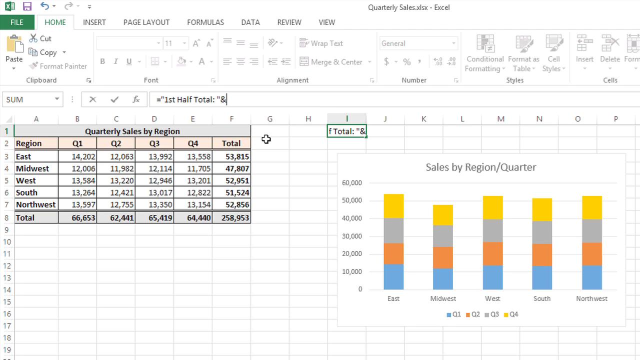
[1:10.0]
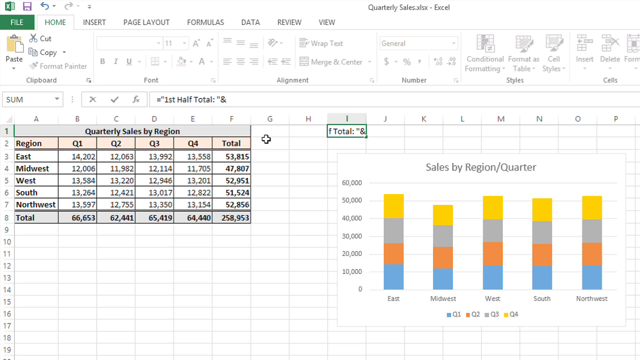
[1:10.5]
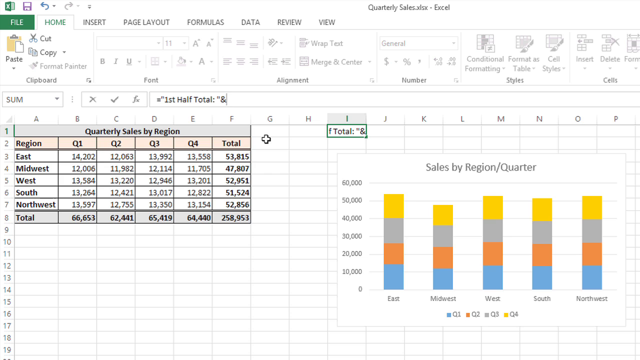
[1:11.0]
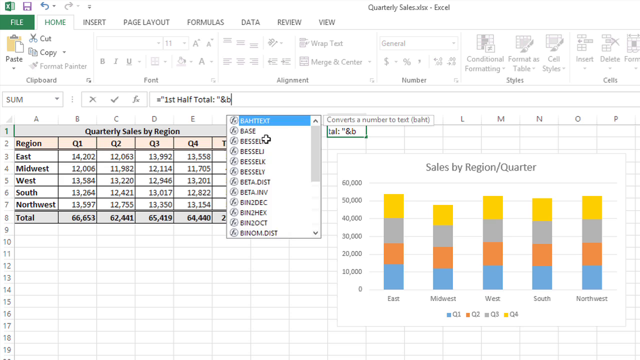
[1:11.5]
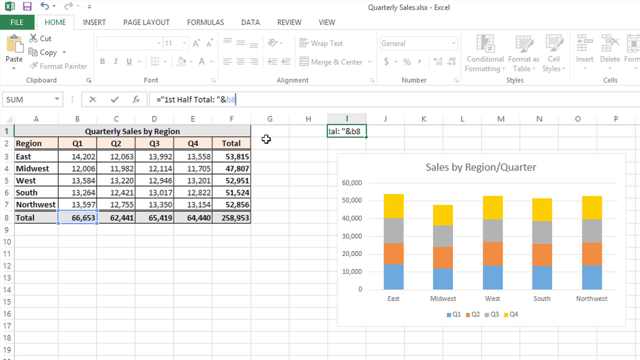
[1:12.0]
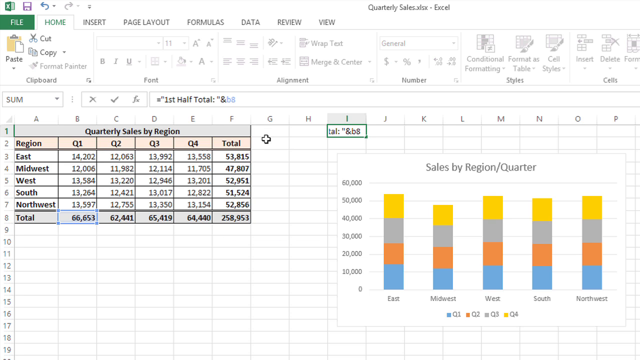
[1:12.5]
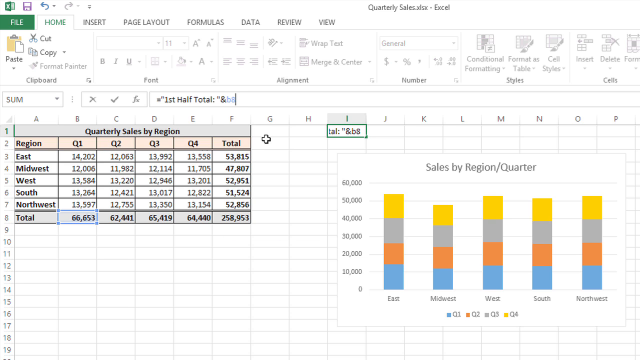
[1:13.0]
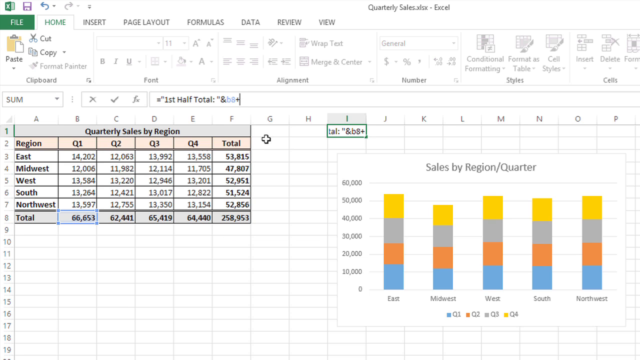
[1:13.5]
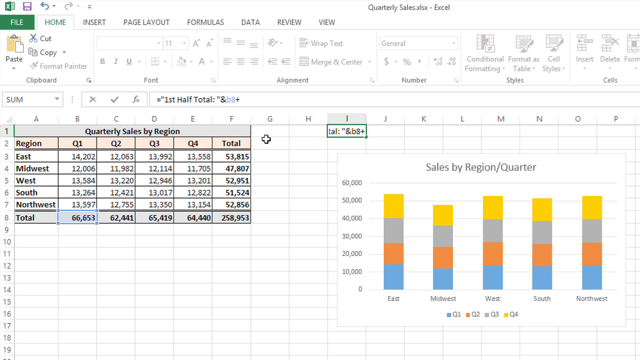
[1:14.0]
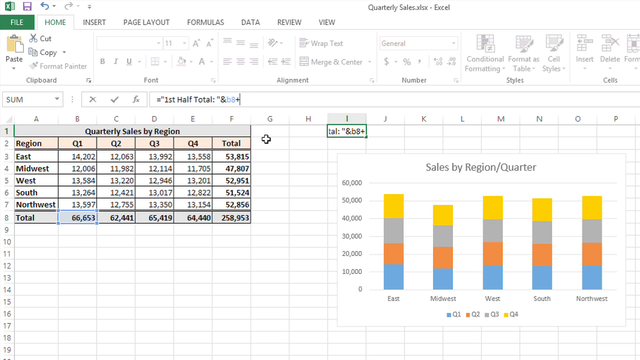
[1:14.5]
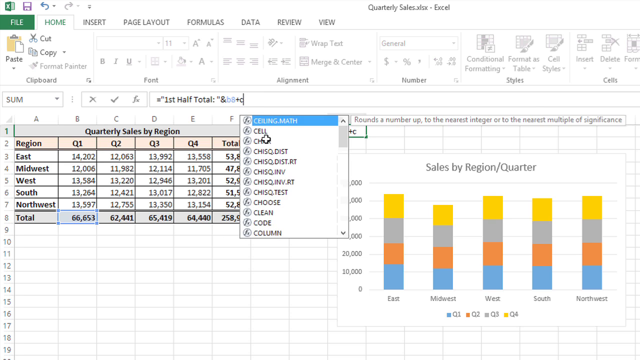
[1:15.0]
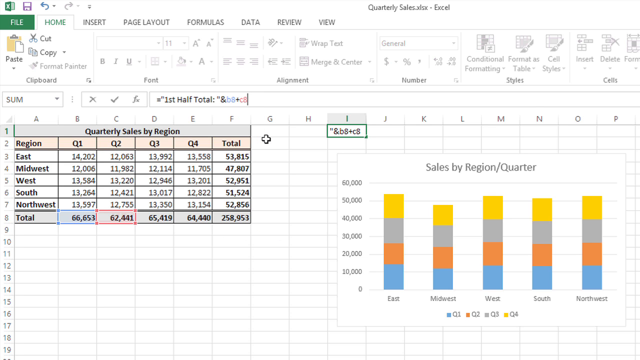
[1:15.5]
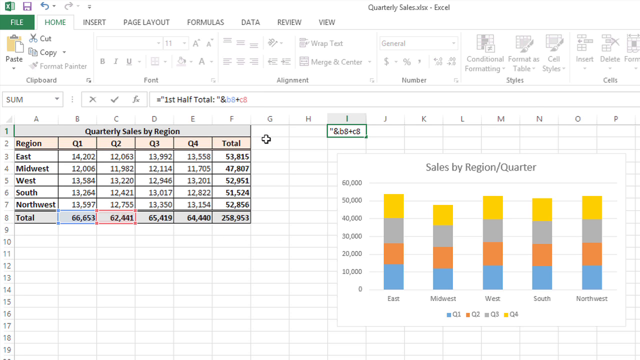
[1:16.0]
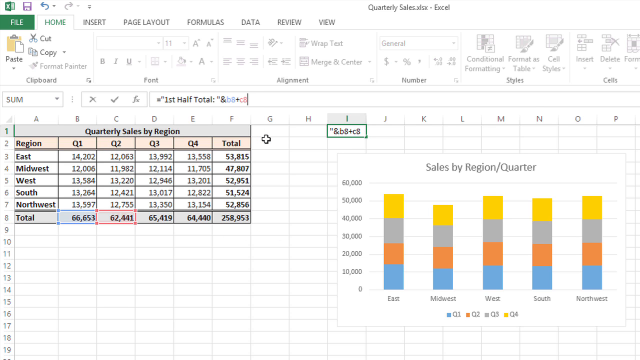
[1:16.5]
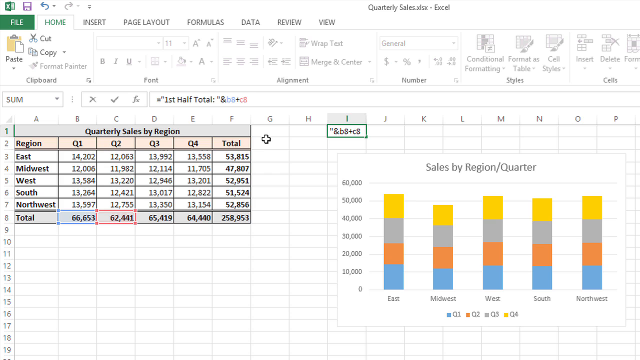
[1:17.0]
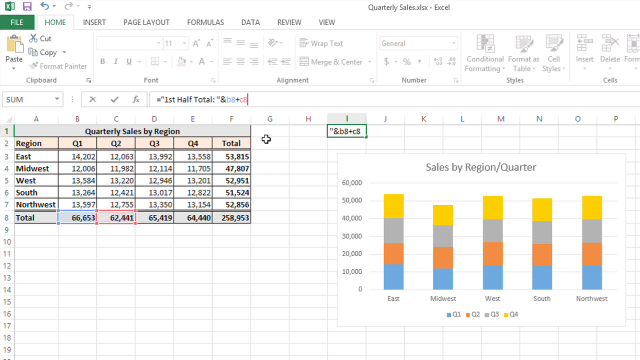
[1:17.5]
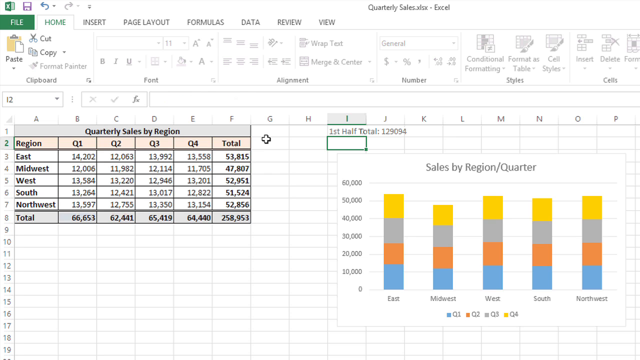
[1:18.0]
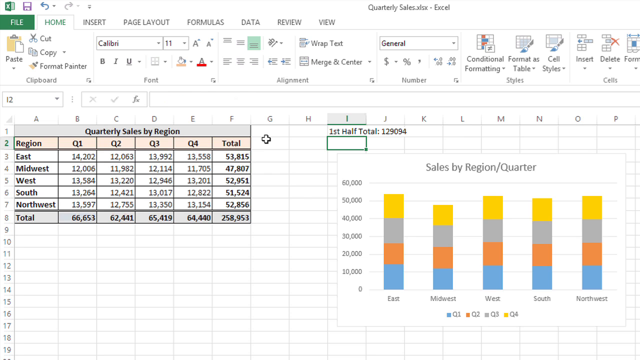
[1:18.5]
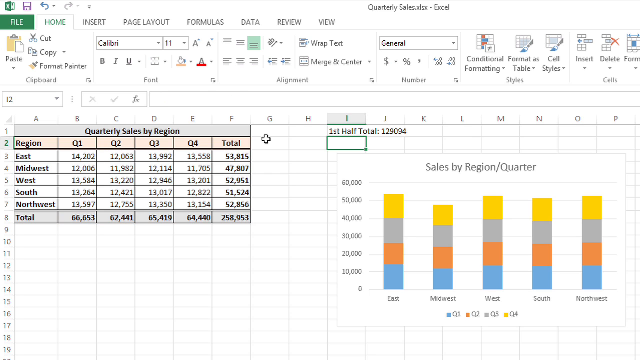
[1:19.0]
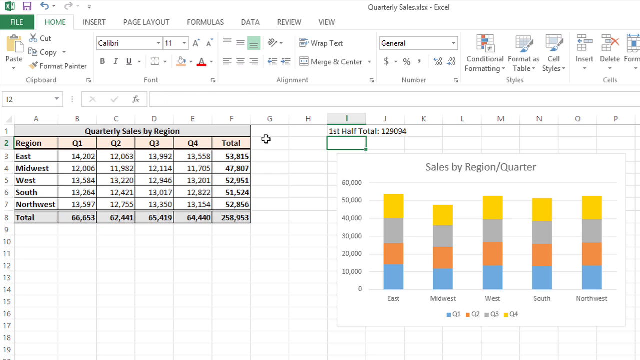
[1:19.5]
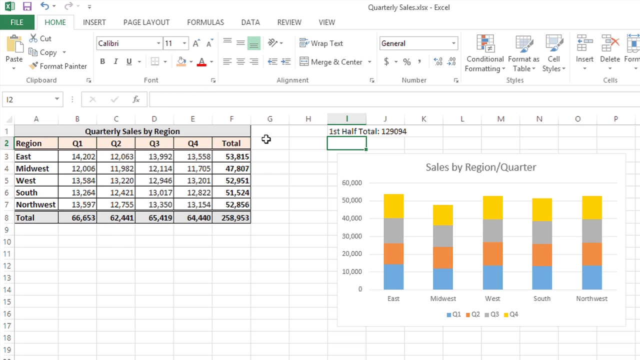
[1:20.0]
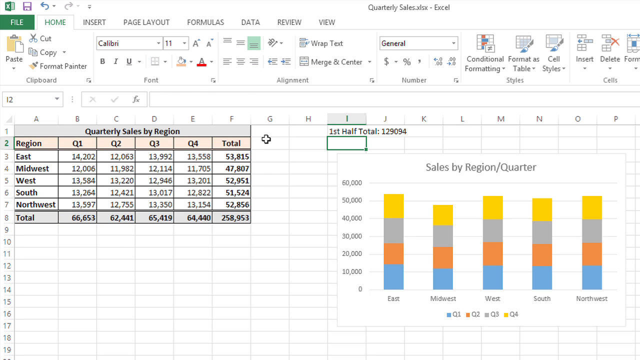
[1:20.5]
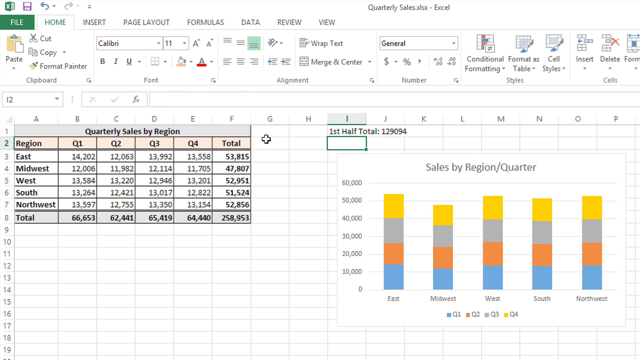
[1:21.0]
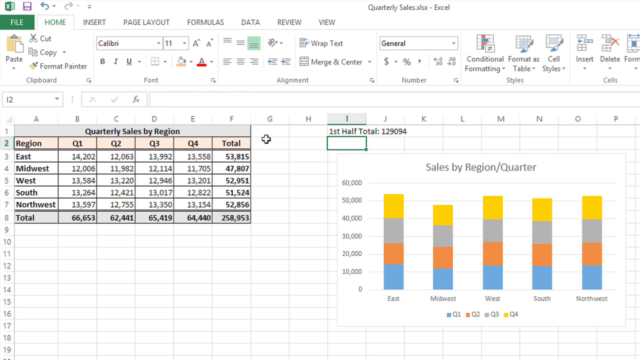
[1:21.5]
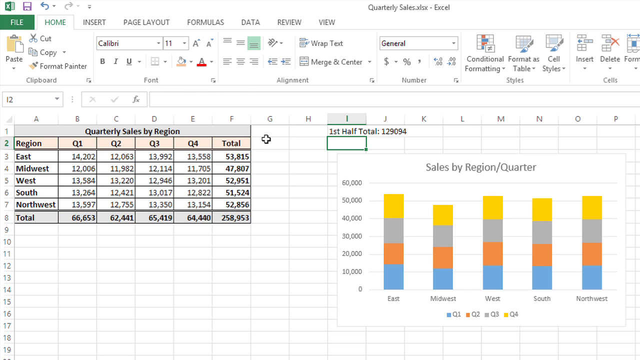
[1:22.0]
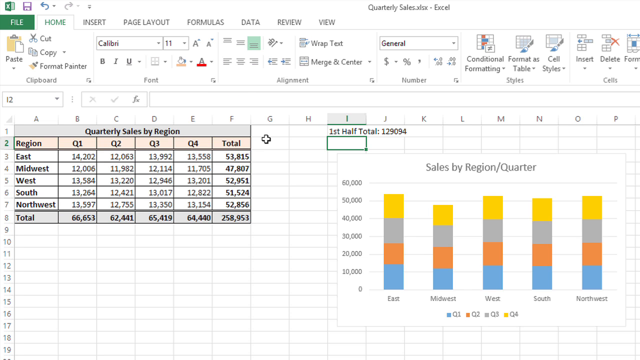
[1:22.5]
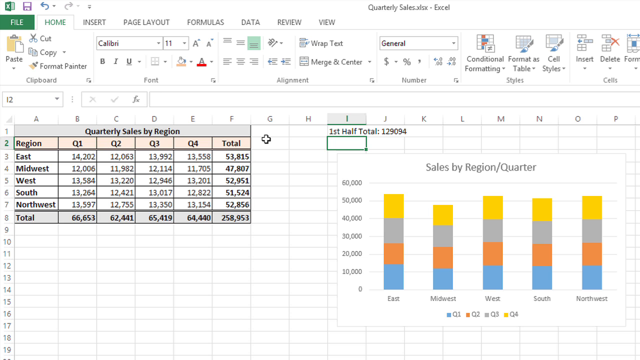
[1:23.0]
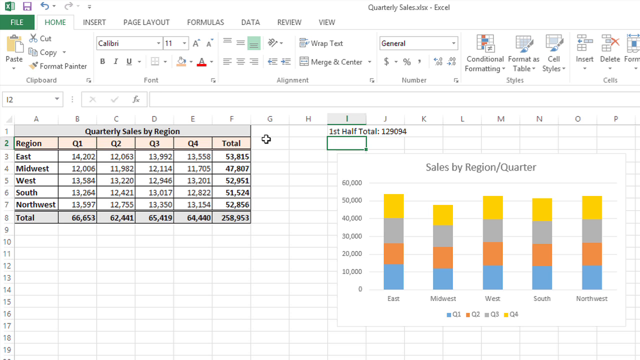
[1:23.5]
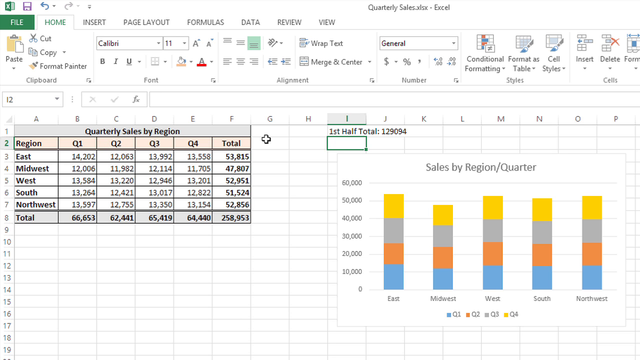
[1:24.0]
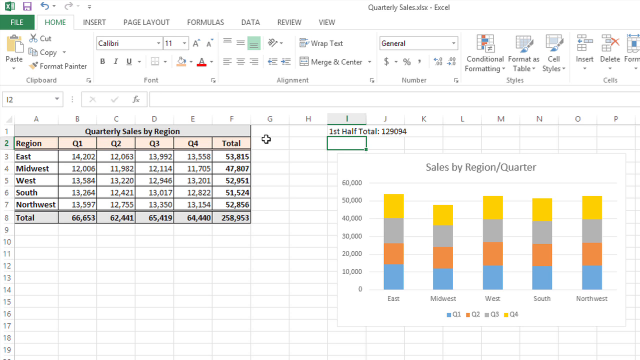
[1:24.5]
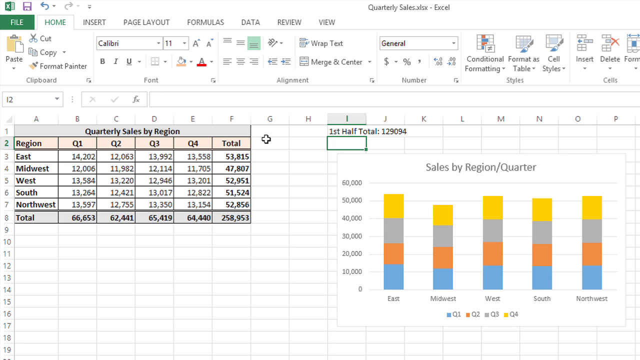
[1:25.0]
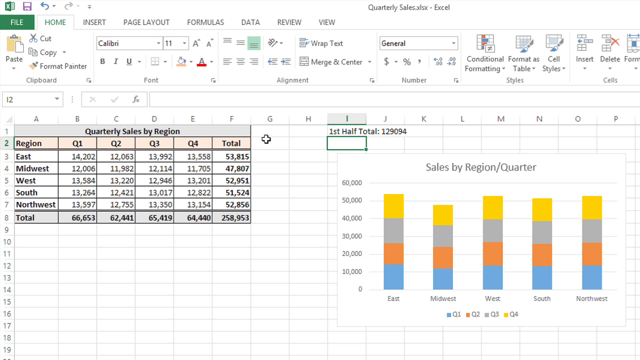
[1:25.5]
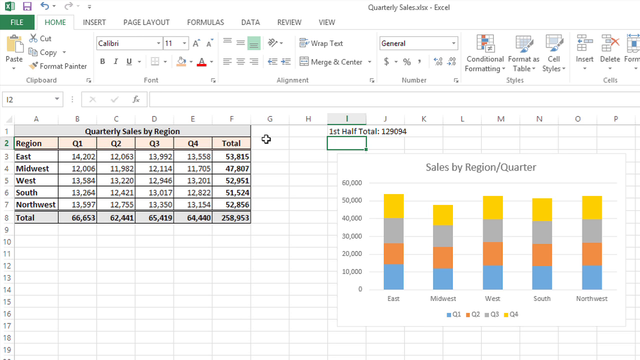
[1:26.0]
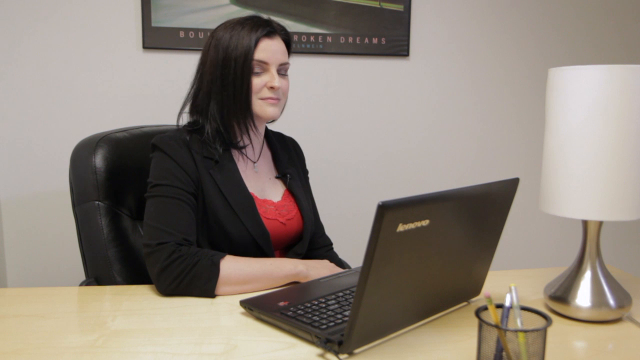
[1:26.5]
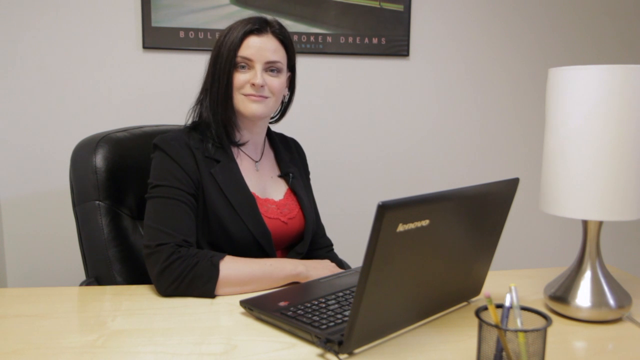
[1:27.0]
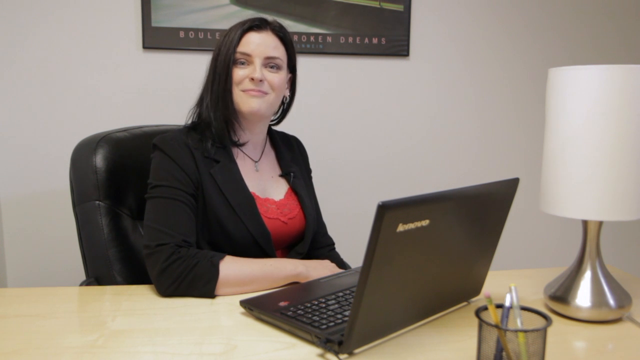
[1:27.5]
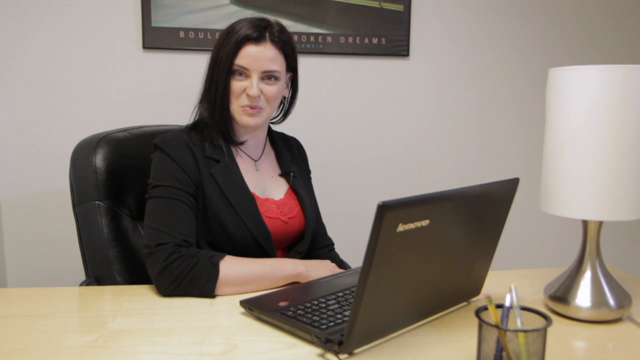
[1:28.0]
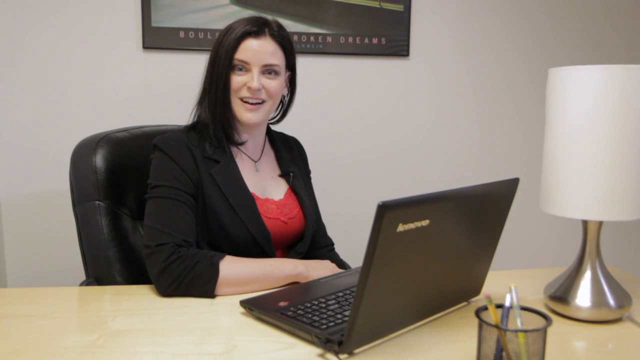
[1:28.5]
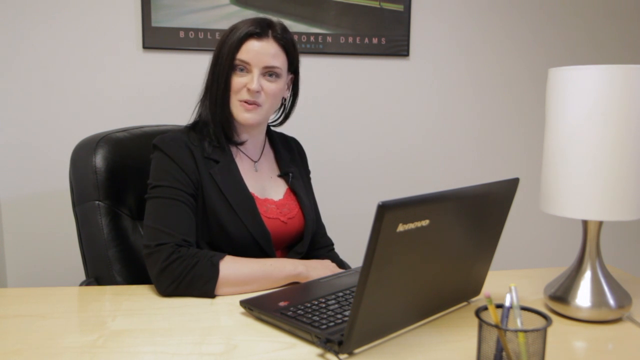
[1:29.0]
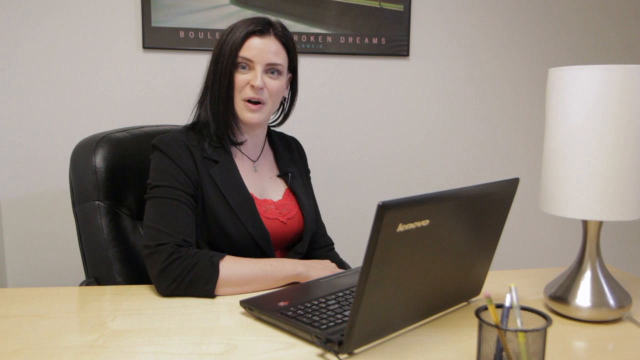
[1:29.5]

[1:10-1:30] The Excel page is still open, and a formula is being typed: an equal sign, a quotation mark, "first half total", two dots, a quotation mark, then B8 in a blue font, followed by a plus sign back in black font. A pop-up menu briefly drops down, and C8 is selected, shown in a red font. The total then appears, reading "first half total, 12,094". The two graphs remain on the screen. The video then returns to the woman sitting at her desk, talking to the camera. She is not using her hands; one is down under the desk out of view, and one of her arms is kind of resting on the end of the desk.